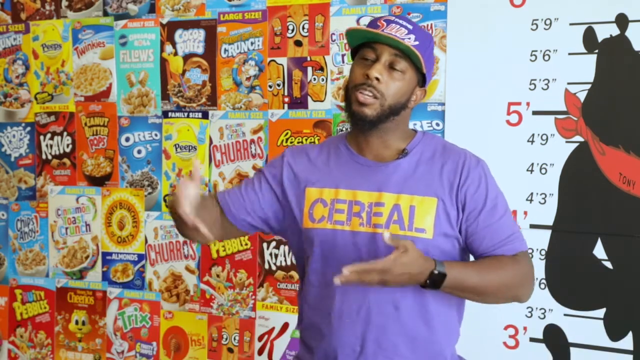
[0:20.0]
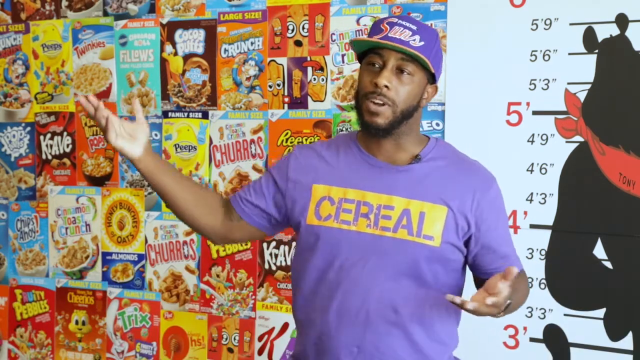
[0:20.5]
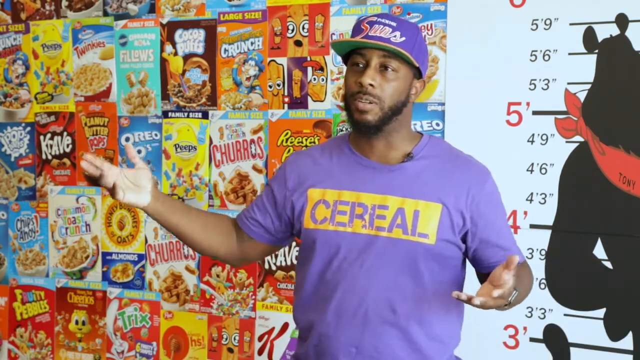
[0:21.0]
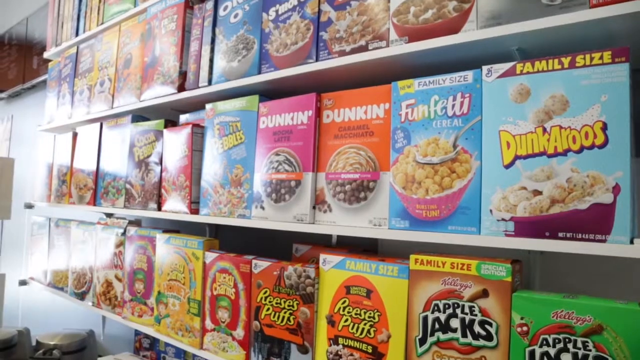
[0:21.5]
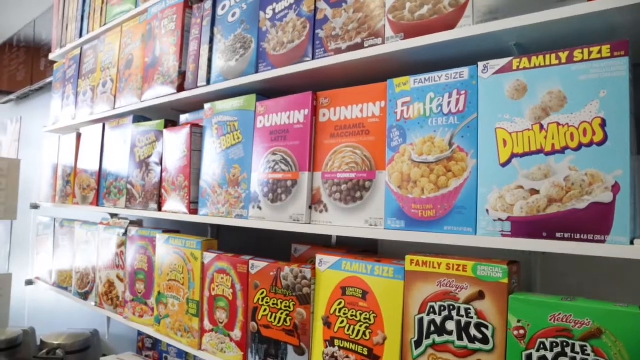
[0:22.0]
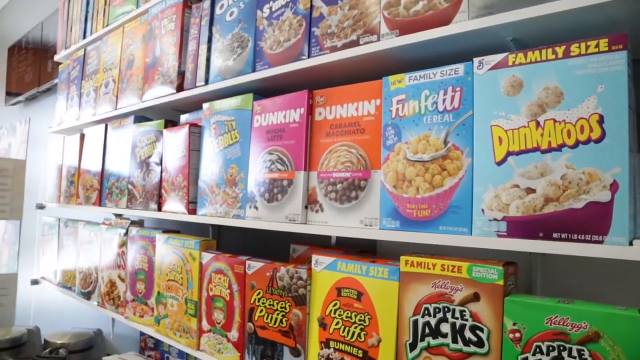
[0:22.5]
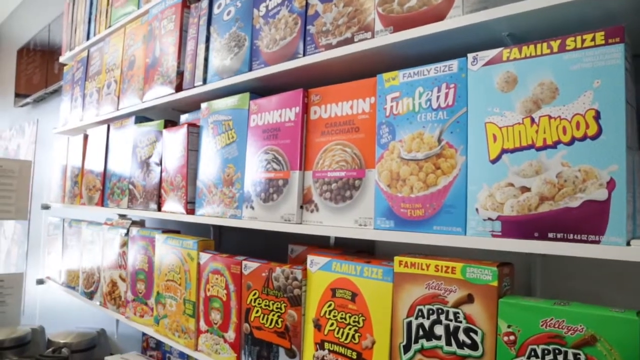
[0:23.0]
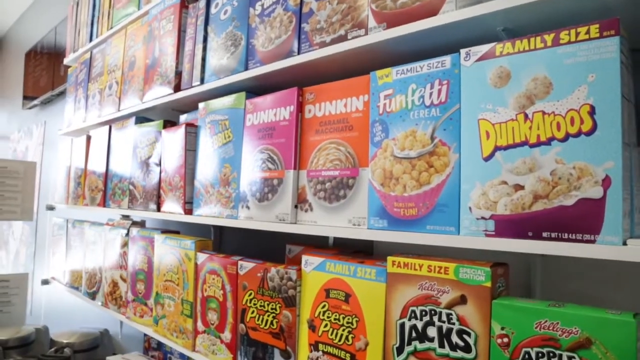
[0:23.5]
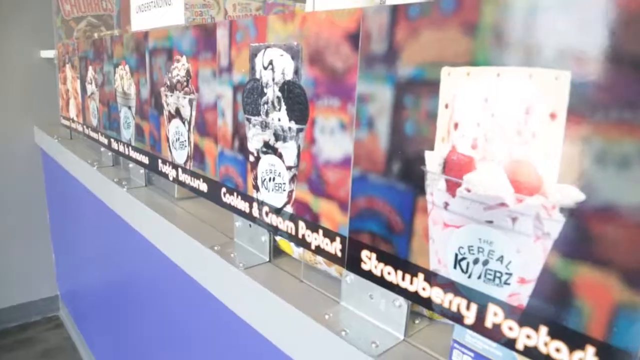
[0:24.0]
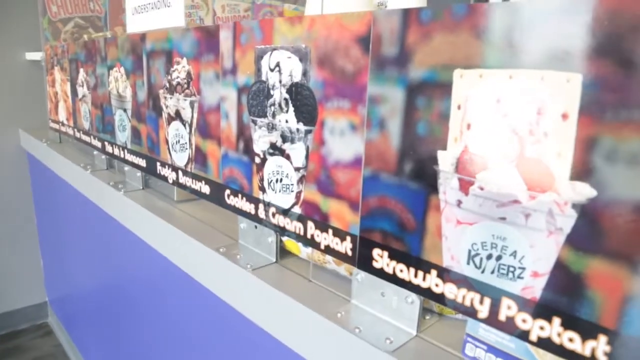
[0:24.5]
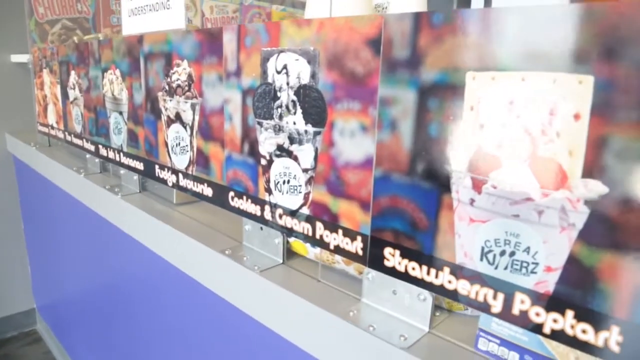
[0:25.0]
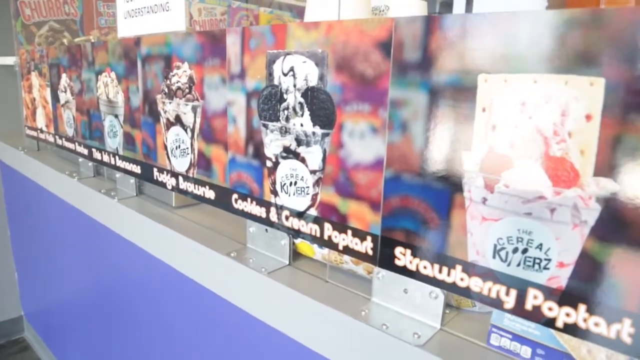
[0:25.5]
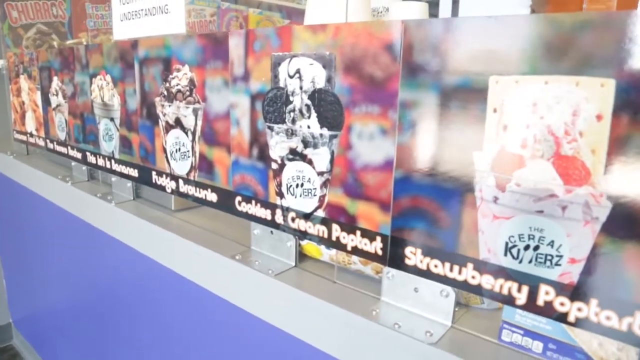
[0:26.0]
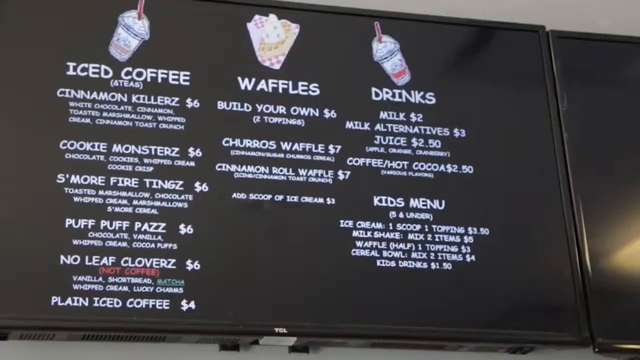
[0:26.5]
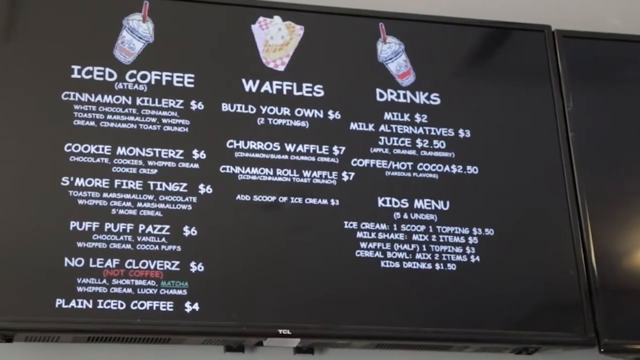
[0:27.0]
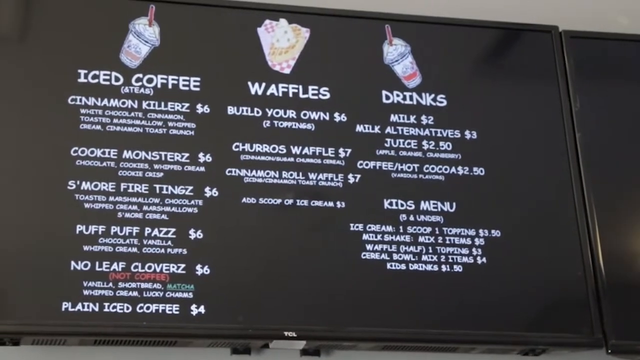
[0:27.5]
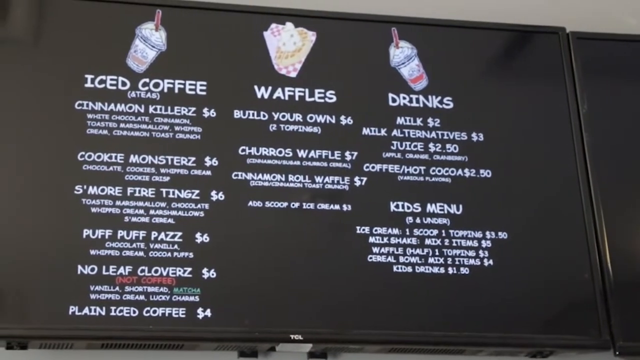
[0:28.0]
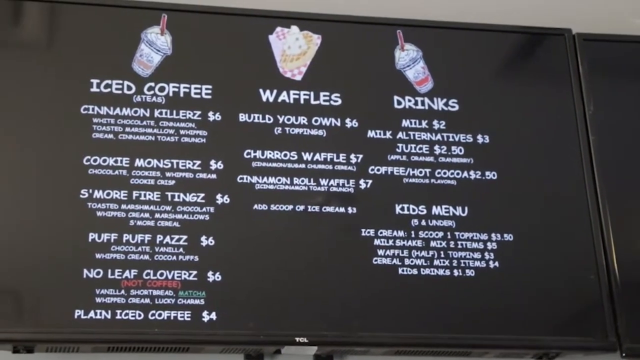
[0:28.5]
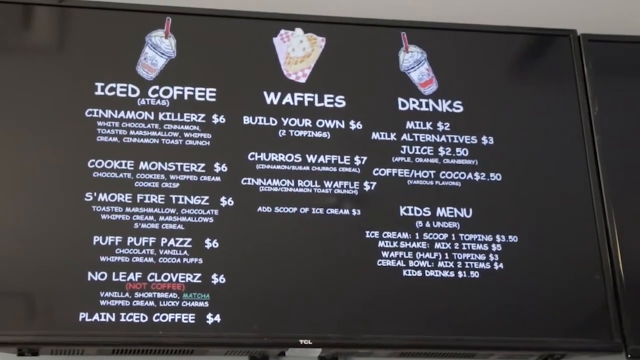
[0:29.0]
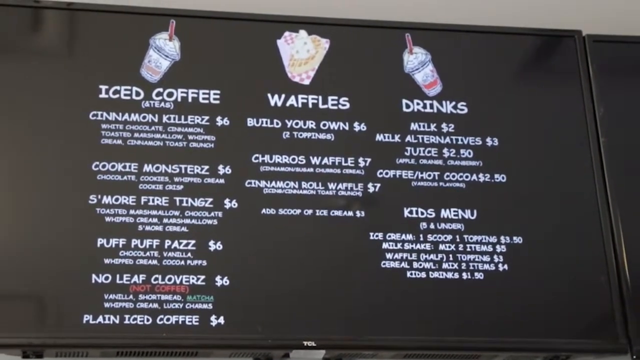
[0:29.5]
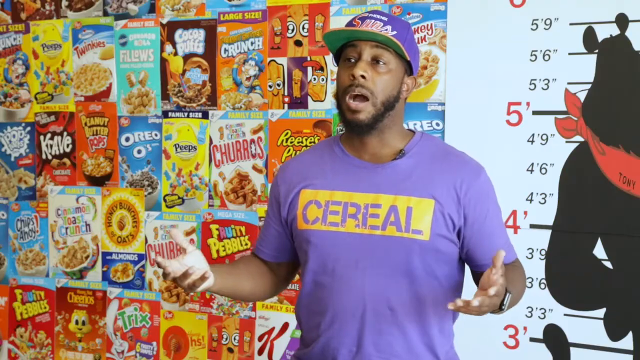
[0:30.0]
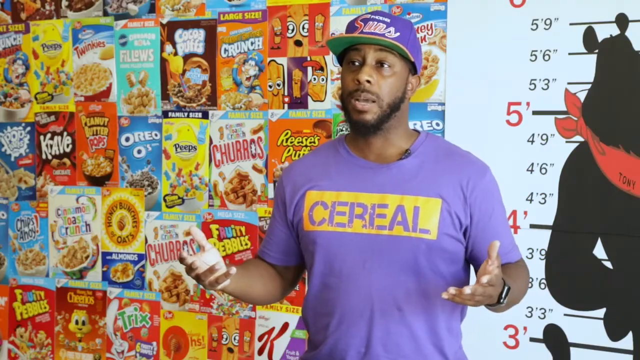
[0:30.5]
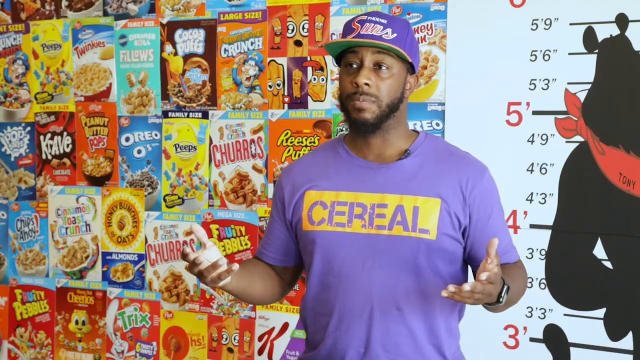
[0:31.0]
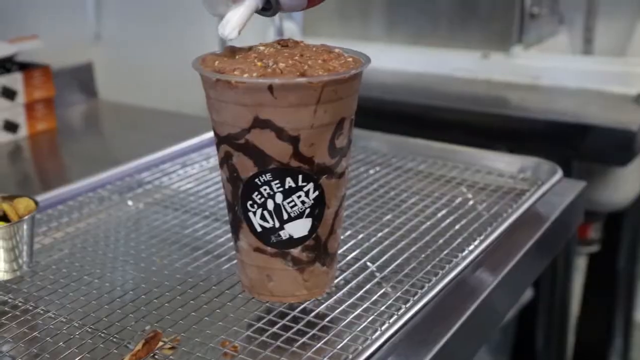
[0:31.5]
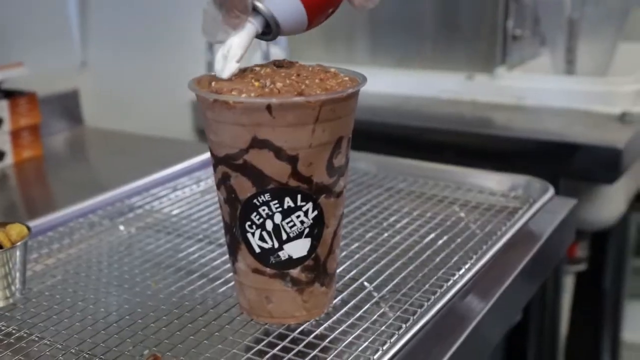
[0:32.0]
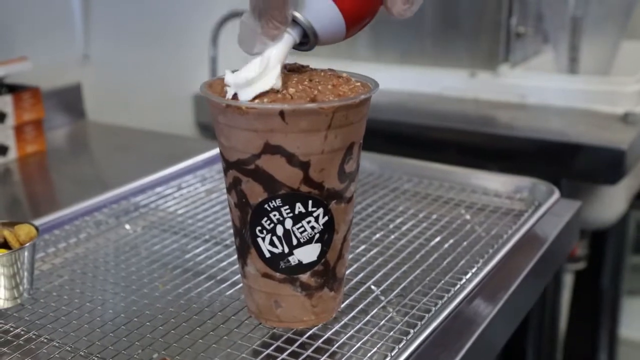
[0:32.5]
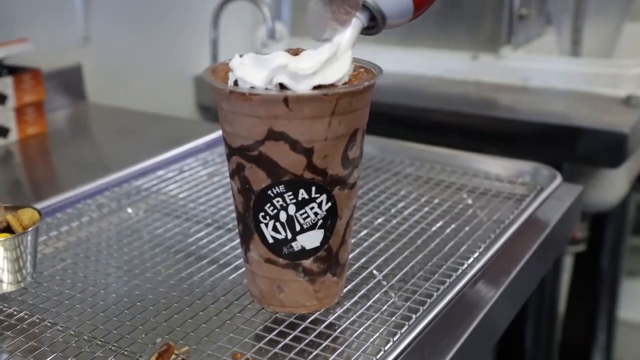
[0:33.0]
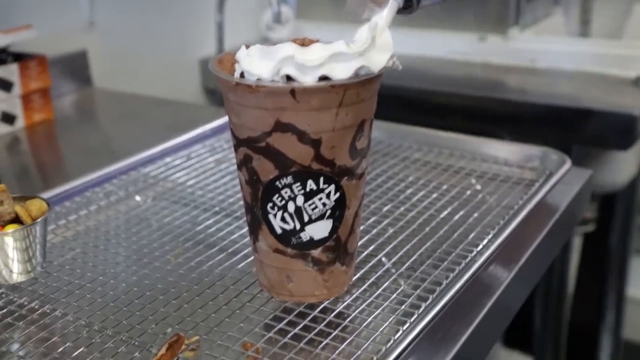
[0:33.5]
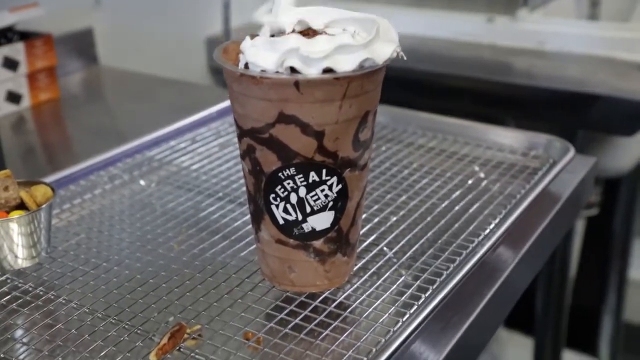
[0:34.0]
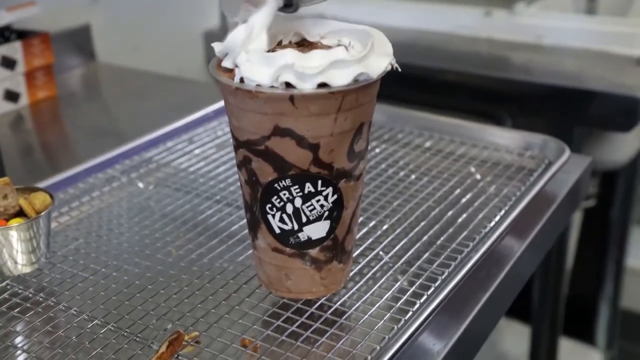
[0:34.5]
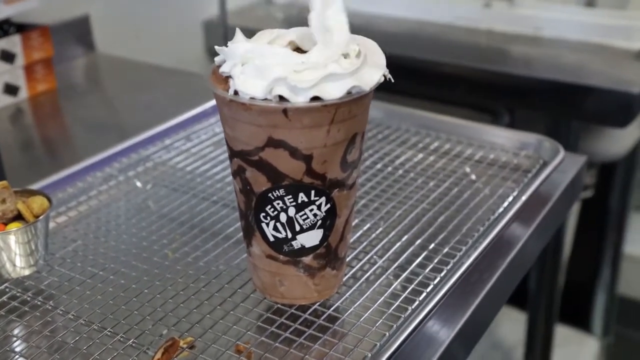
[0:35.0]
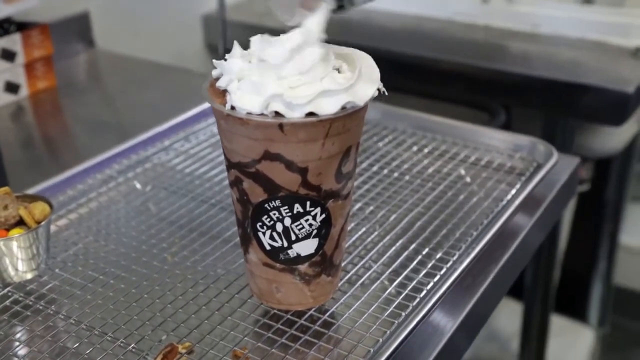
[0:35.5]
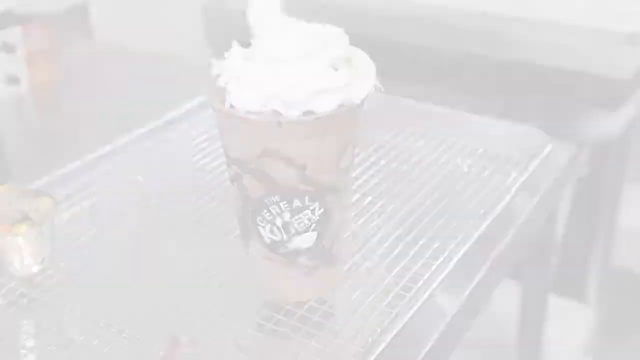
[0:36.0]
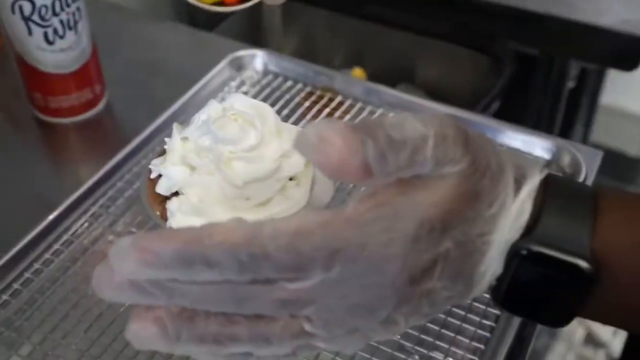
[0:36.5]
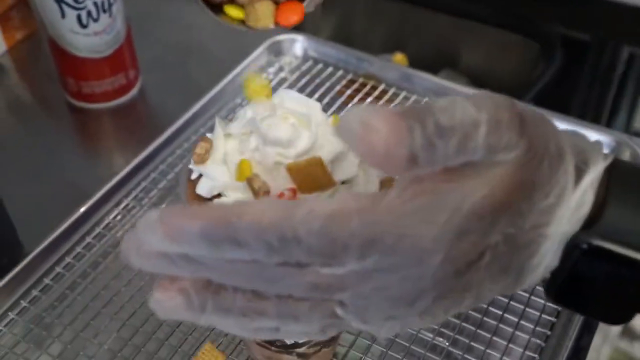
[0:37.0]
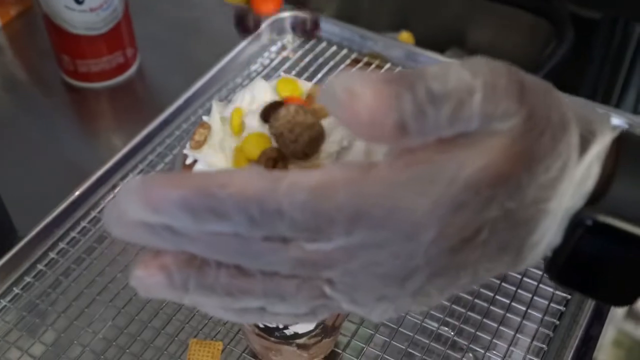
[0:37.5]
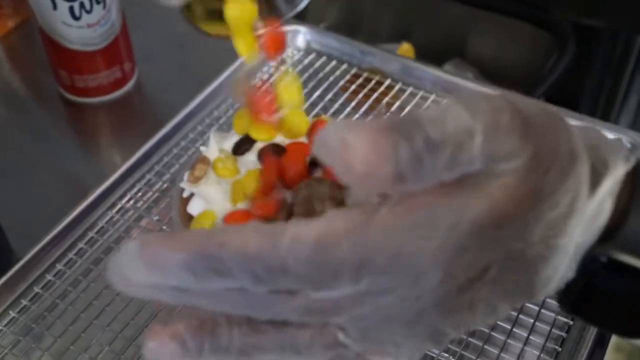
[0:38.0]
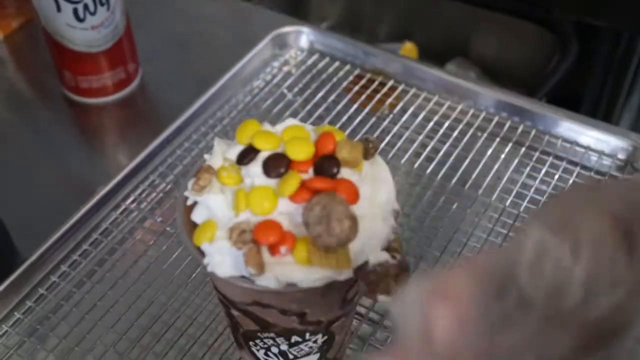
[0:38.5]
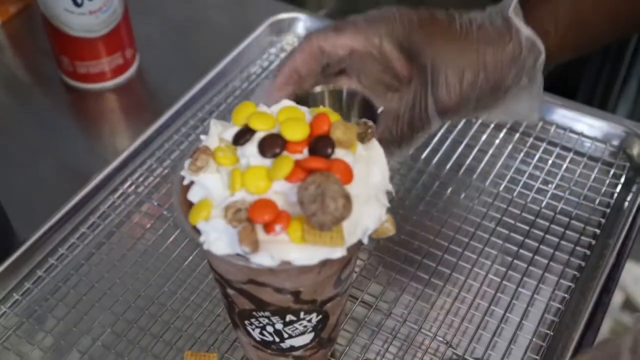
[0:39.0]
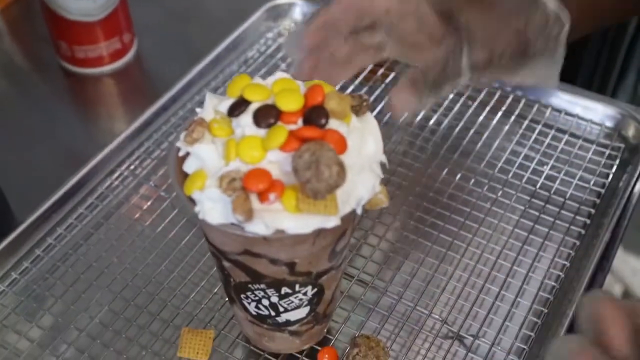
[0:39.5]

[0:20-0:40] The co-owner of the Serial Killers brand appears in a purple top and a cap; he has a beard. More than 20 cereal boxes are placed side by side on shelves, in rows of probably four. There are many types, such as Dunkaroos, Funfetti cereal, Dunkin' Donuts or Dunkin cereal, Apple Jacks, Reese's Puffs, Lucky Charms and S'mores, all colorful and unique. Next come glimpses of the different dessert options offered by Serial Killers, including strawberry, cookies and cream, and fudge brownie, which look aesthetically pleasing. Their board shows that they offer iced coffee, waffles and drinks, with iced coffee flavors including cinnamon, cookies, s'mores and puff puff; there is also a kids menu. The owner is then shown speaking to the camera, followed by a glimpse of how he makes the desserts for customers.